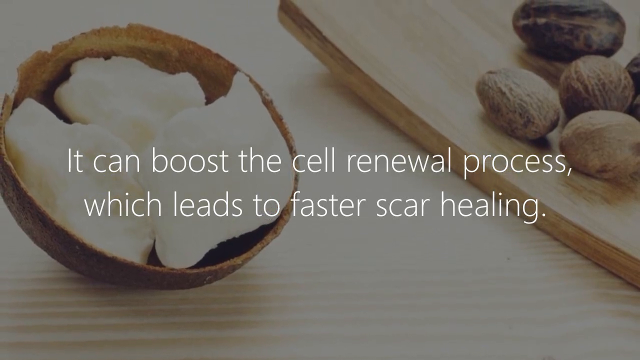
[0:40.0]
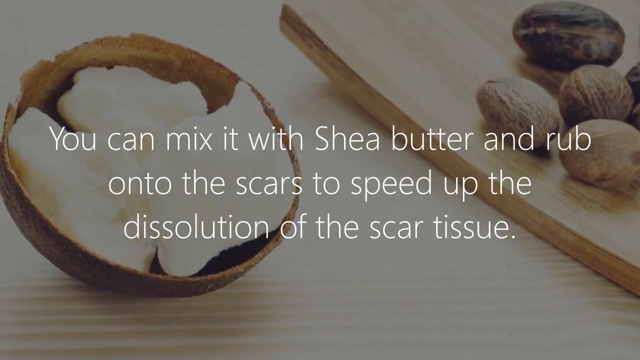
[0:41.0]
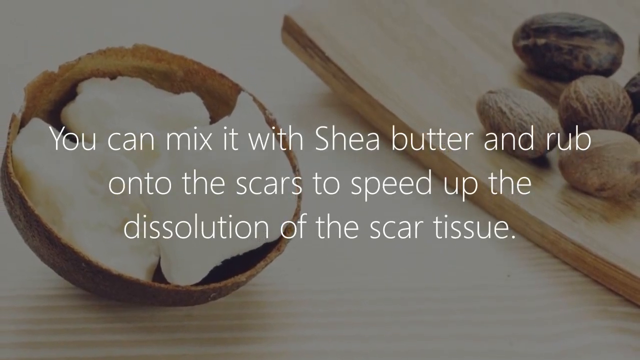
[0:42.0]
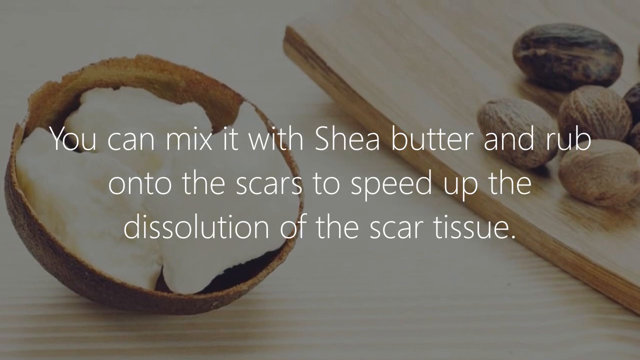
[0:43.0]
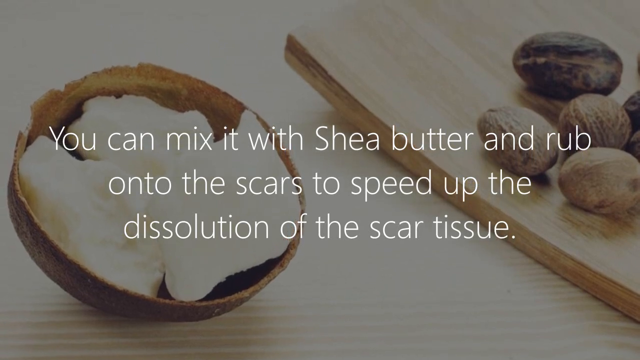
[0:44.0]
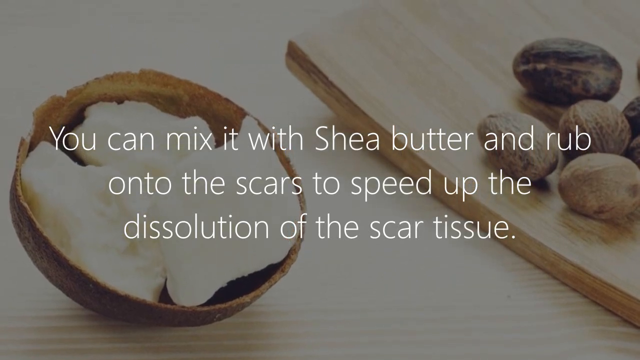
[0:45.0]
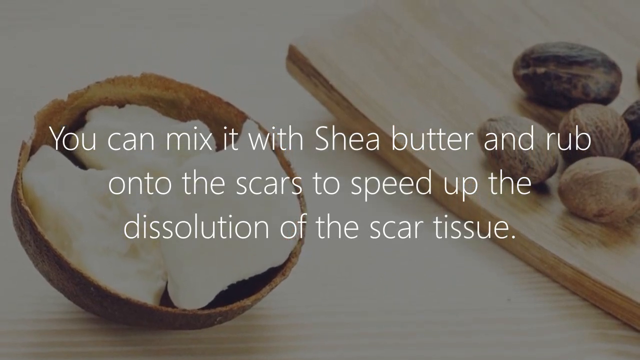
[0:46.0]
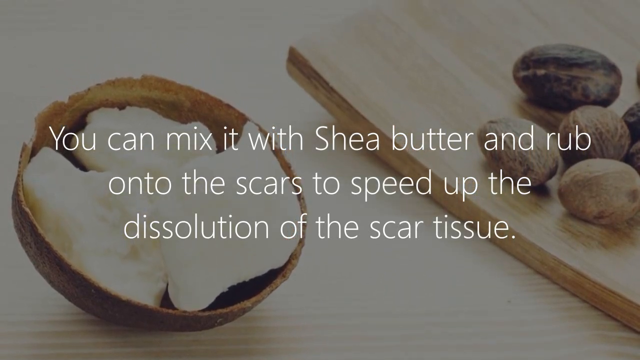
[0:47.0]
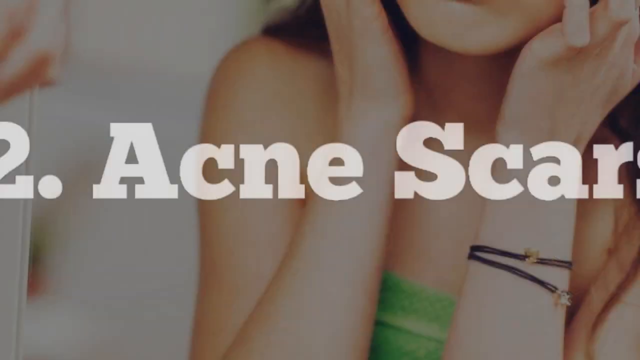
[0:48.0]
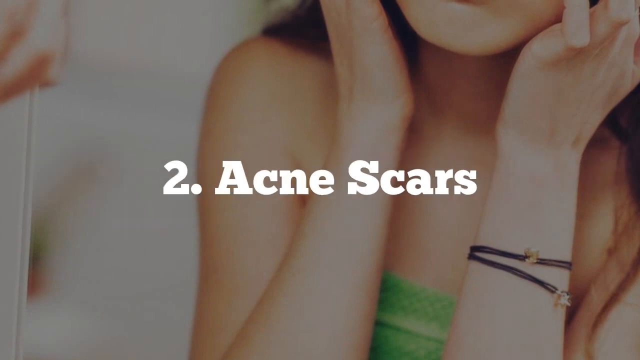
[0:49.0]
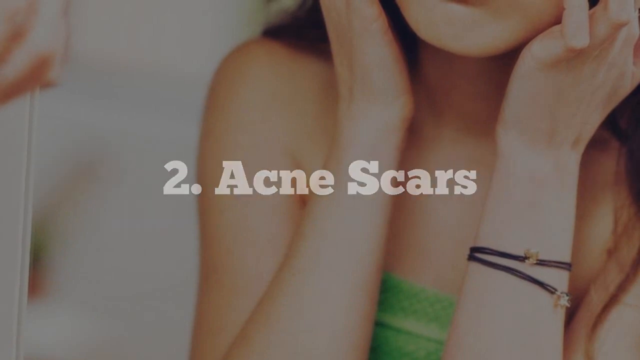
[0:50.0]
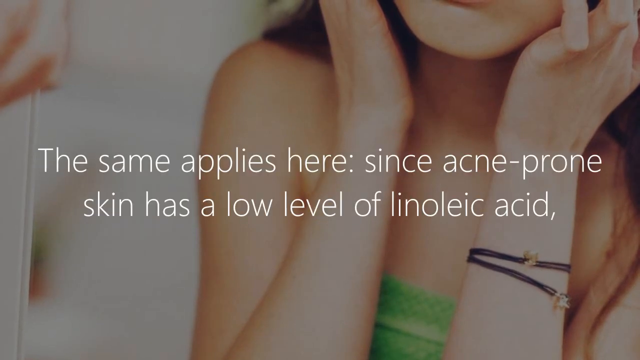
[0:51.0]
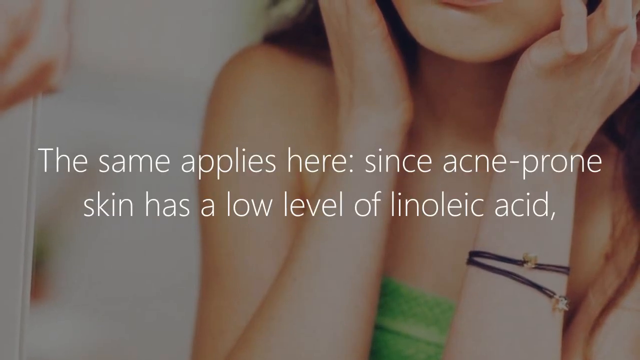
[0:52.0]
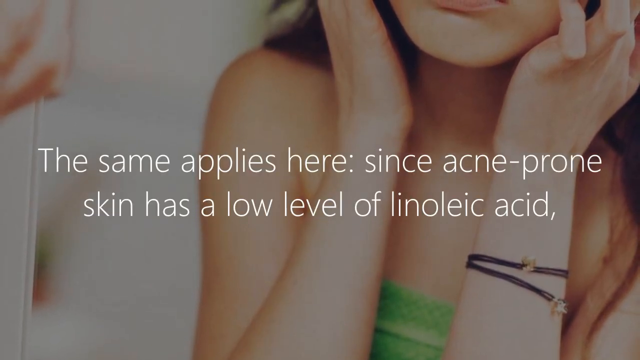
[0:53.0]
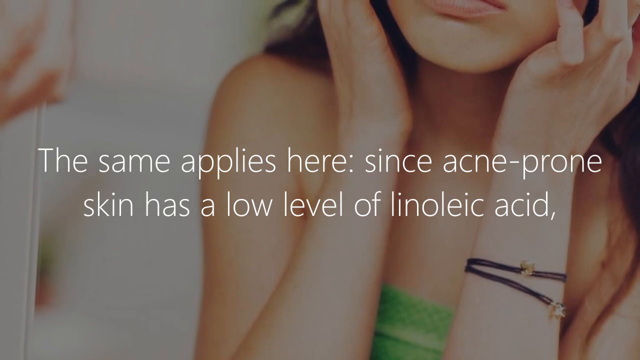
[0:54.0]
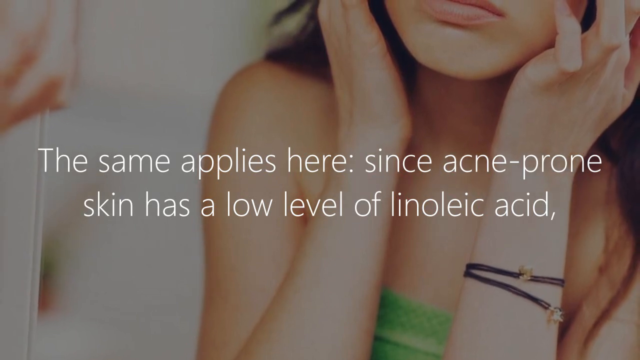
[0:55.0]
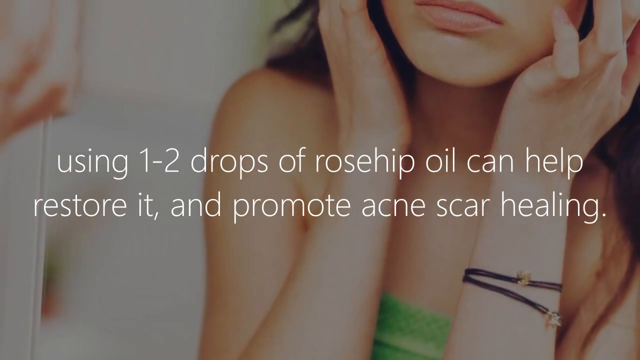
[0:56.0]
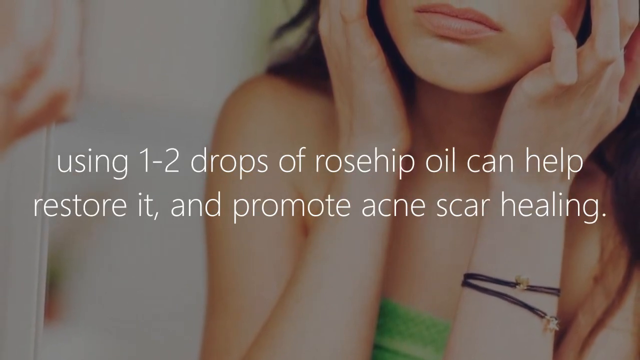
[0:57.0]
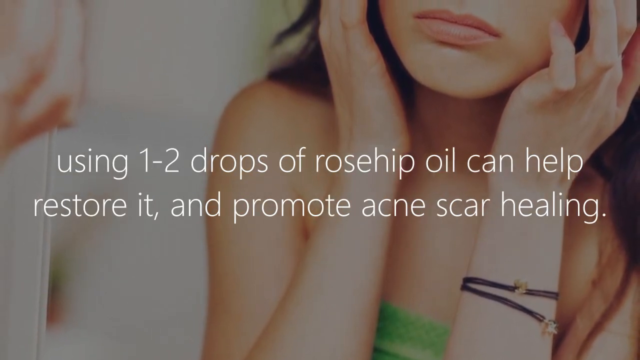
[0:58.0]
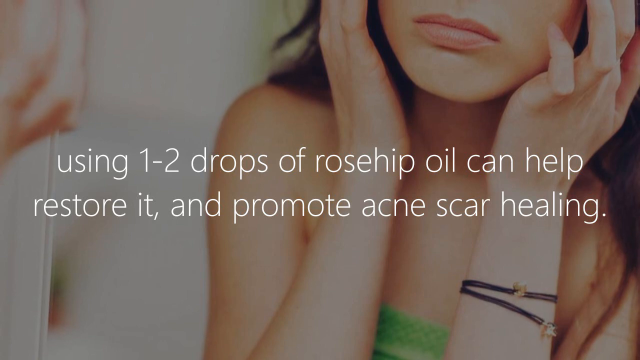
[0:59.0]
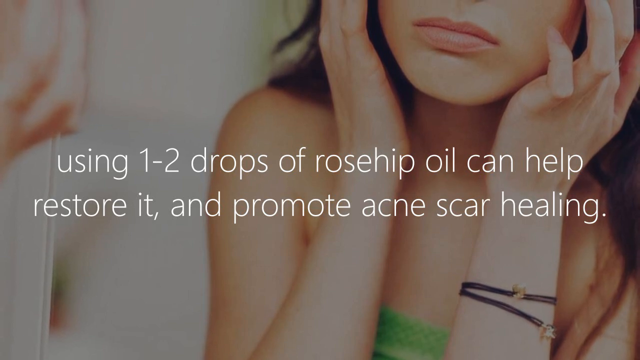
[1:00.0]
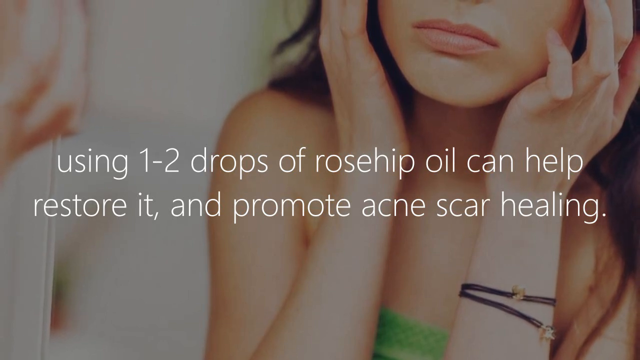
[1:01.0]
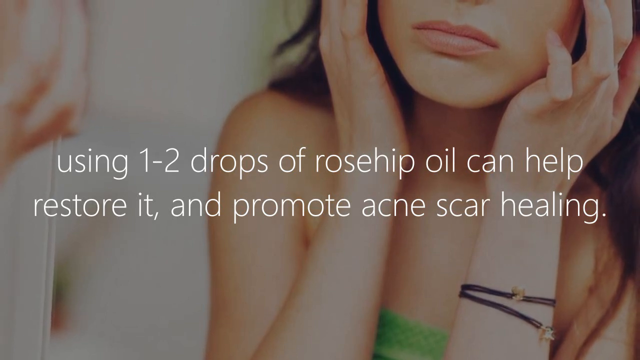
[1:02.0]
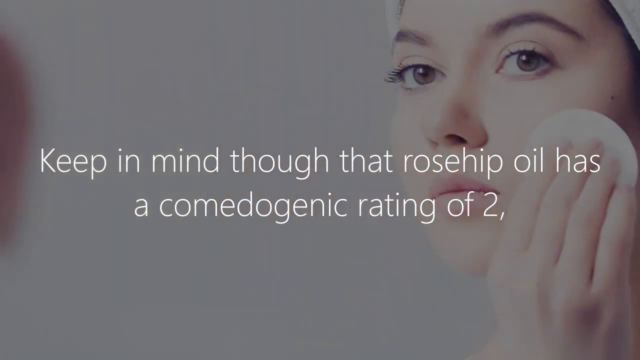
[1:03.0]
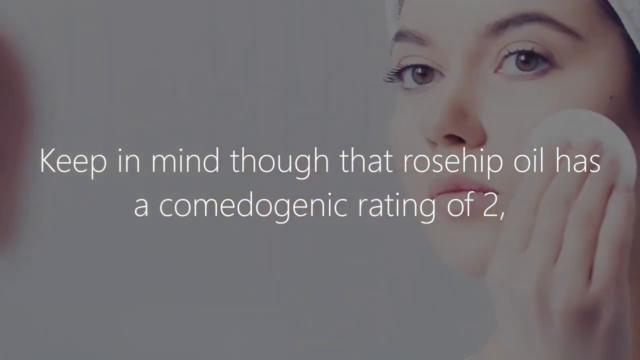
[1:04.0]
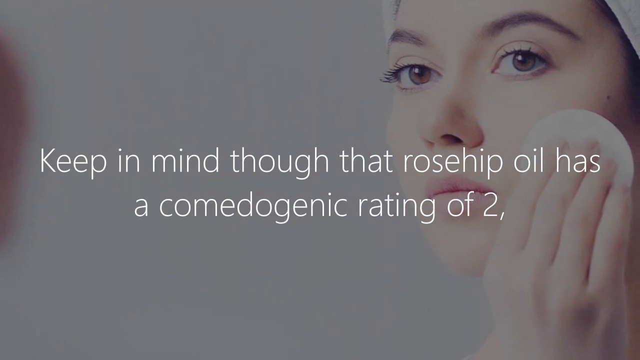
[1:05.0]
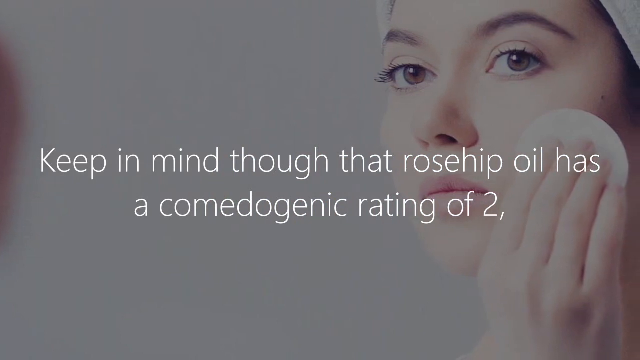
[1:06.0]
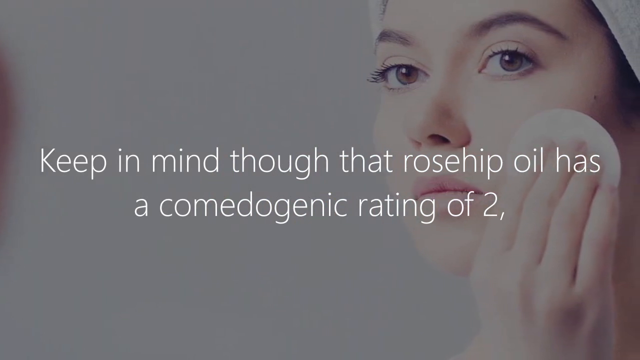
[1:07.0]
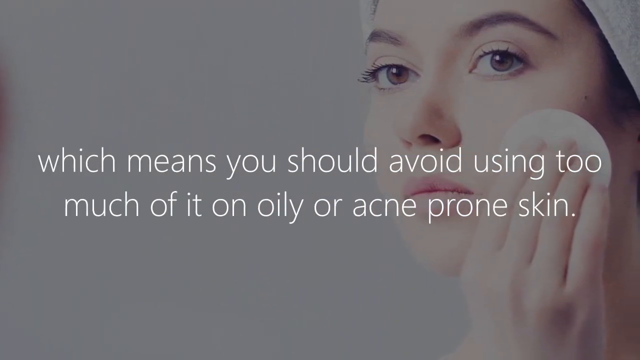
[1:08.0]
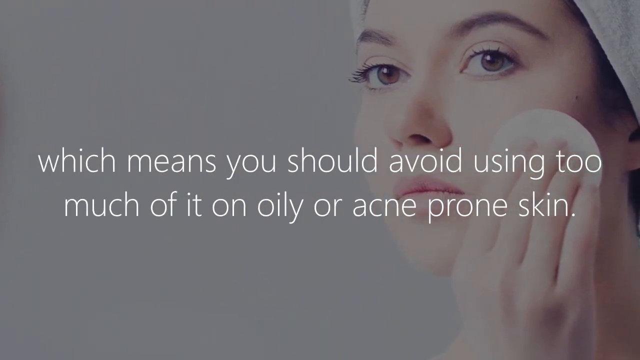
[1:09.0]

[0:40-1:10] The second benefit of rosehip oil for skin is presented: acne scars. The video notes that acne-prone skin has a low level of linoleic acid, that one to two drops of rosehip oil can help restore it and promote acne scar healing, and that rosehip oil has a comedogenic rating of 2, so too much should not be used on oily or acne-prone skin.